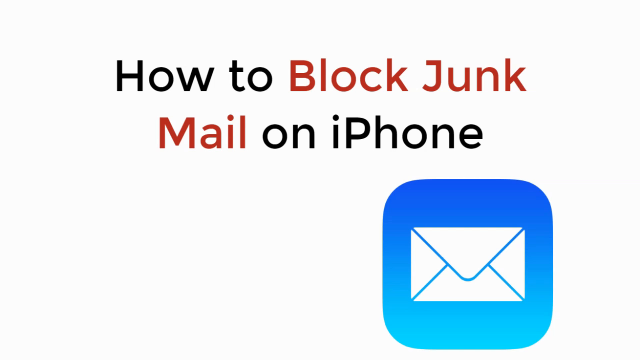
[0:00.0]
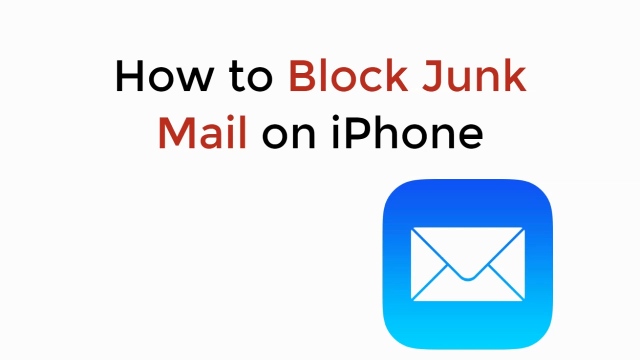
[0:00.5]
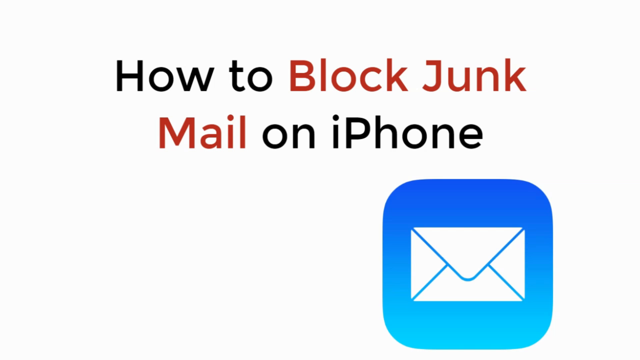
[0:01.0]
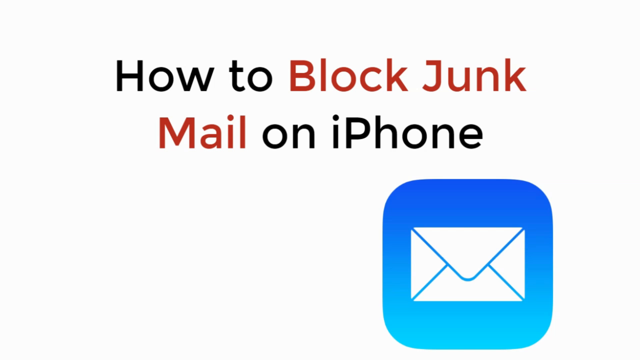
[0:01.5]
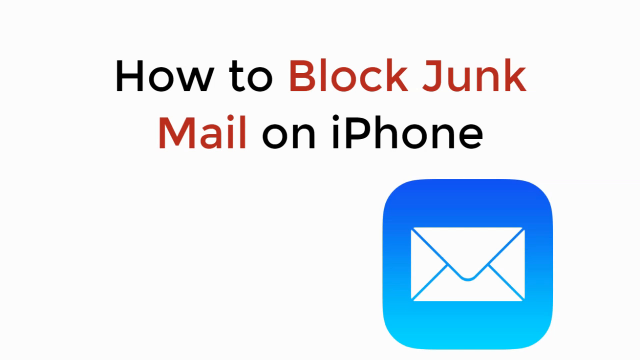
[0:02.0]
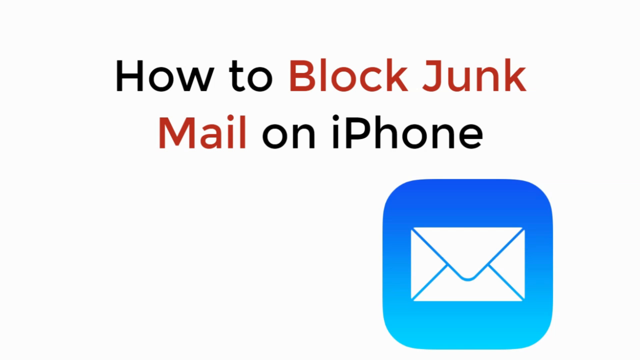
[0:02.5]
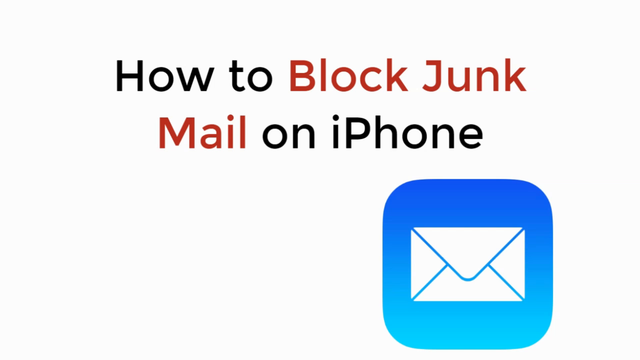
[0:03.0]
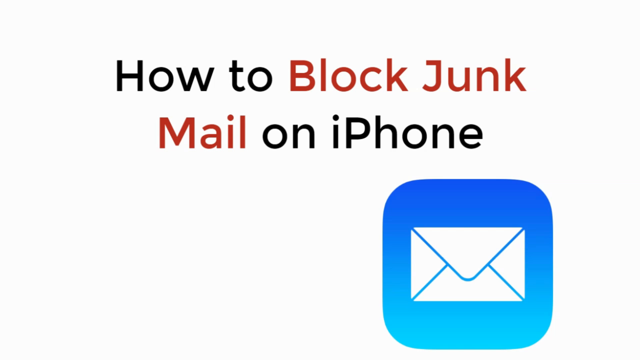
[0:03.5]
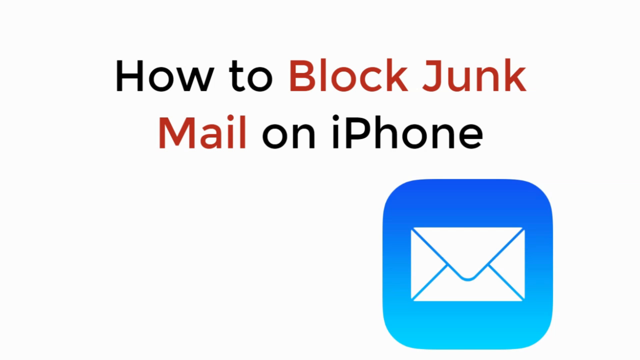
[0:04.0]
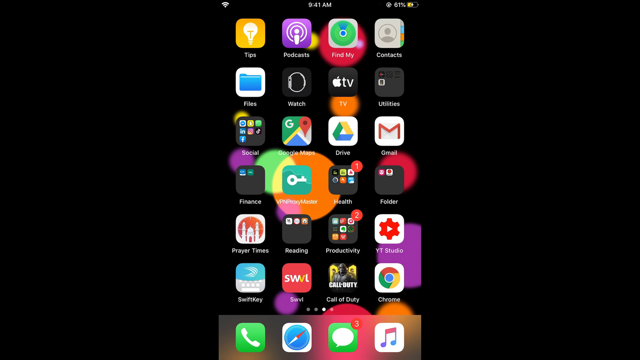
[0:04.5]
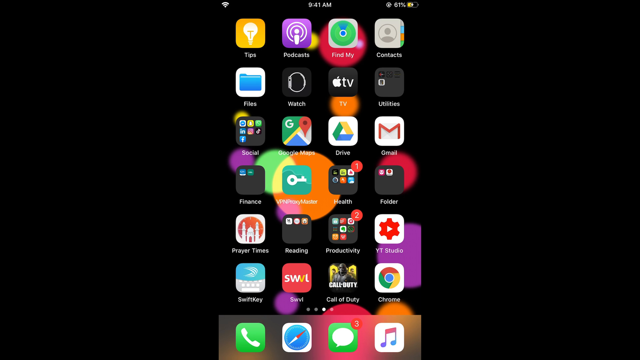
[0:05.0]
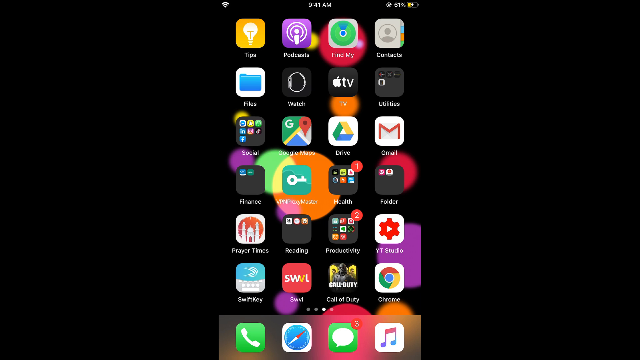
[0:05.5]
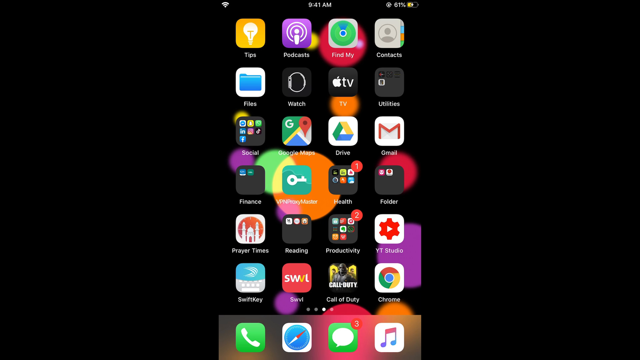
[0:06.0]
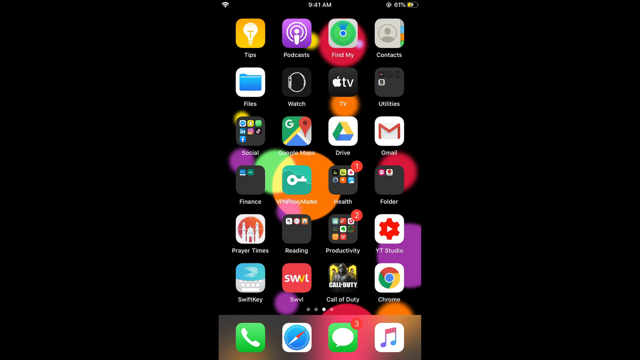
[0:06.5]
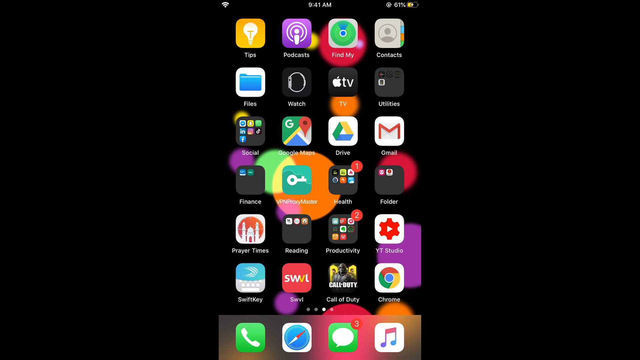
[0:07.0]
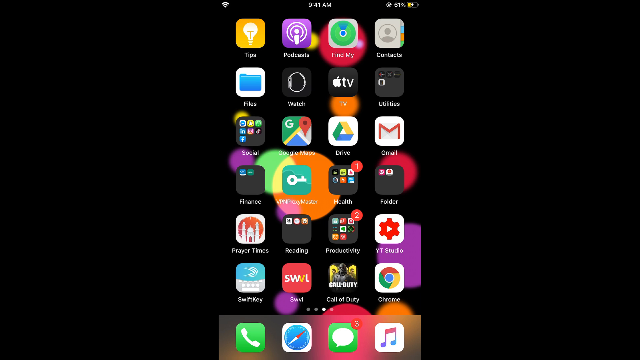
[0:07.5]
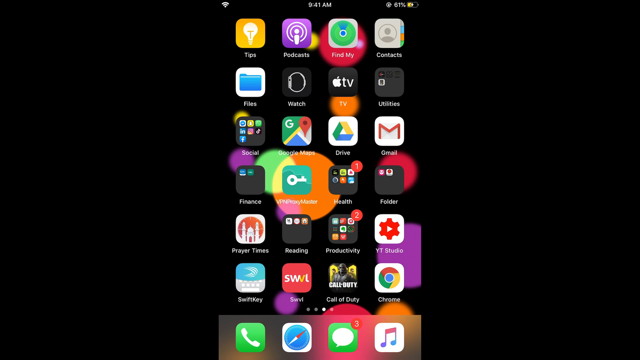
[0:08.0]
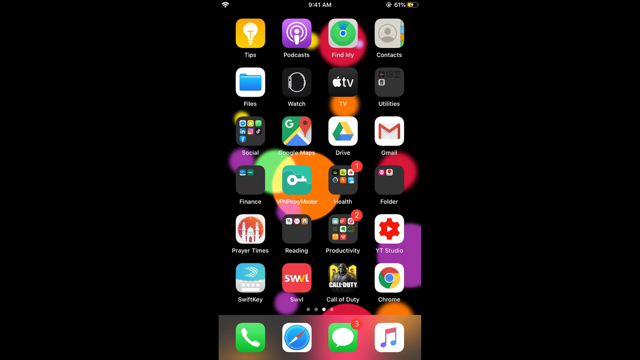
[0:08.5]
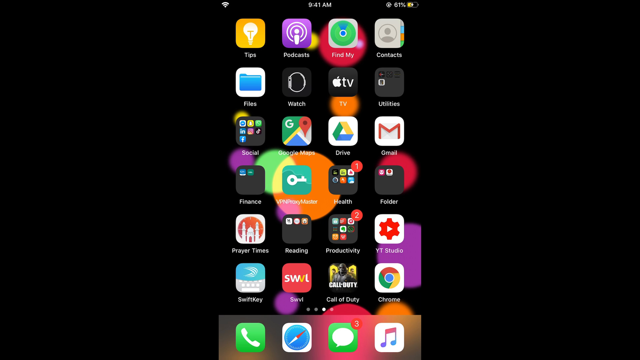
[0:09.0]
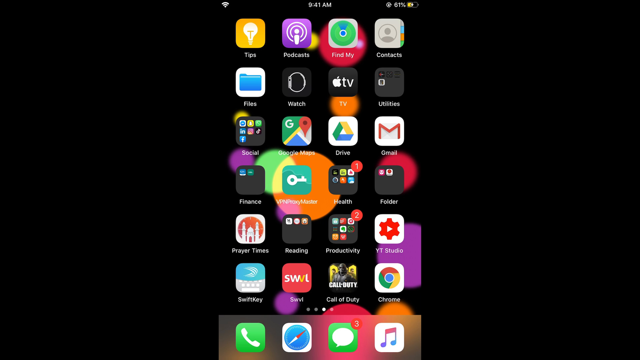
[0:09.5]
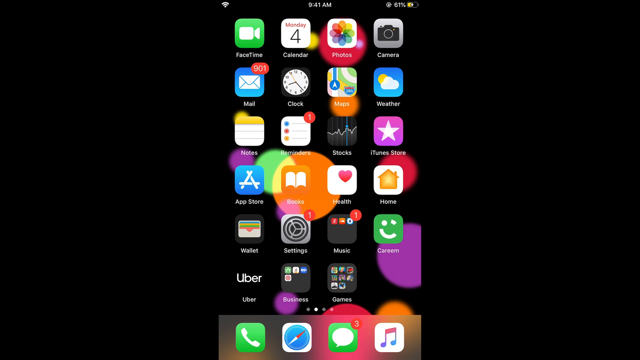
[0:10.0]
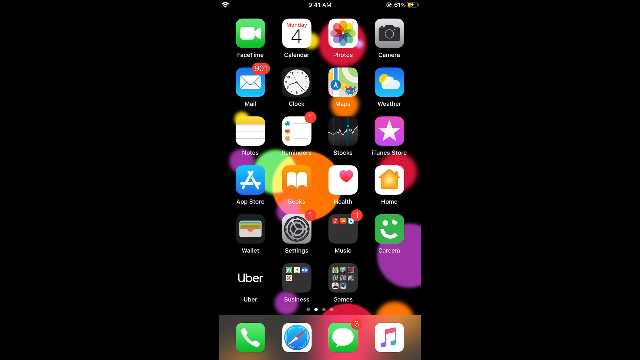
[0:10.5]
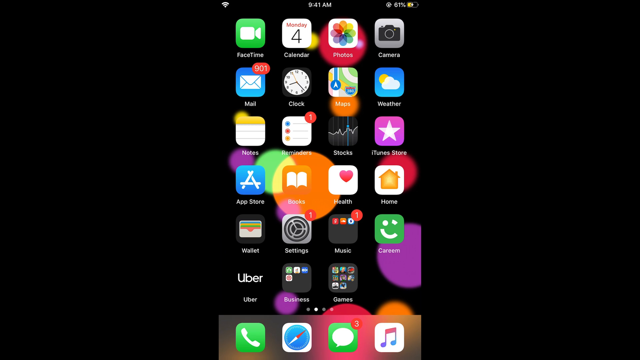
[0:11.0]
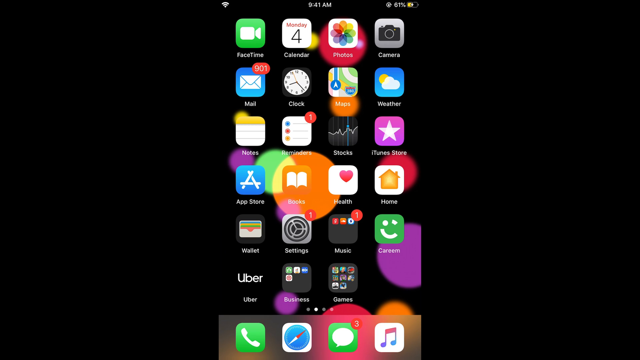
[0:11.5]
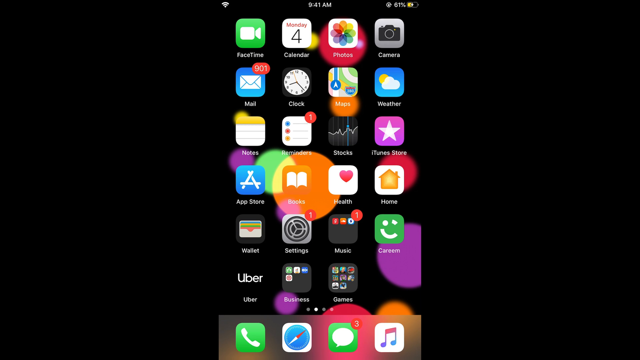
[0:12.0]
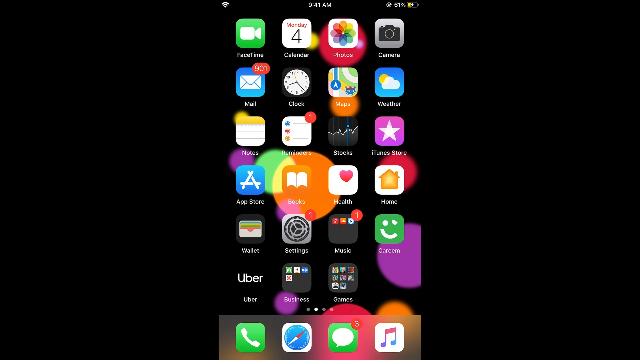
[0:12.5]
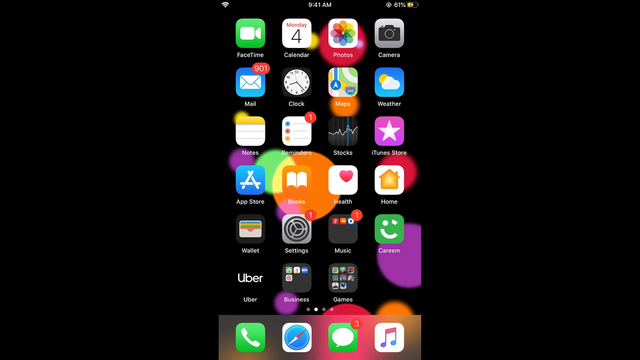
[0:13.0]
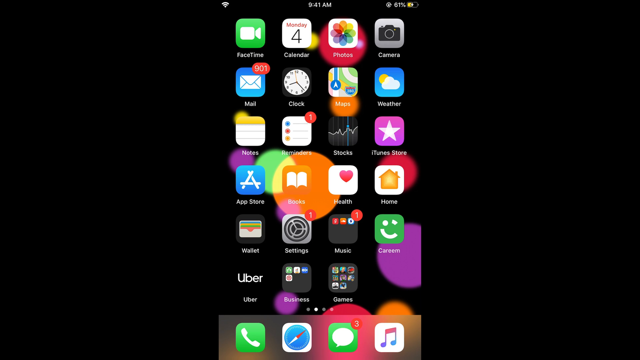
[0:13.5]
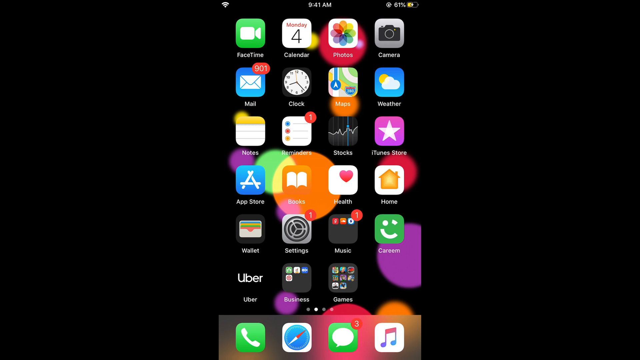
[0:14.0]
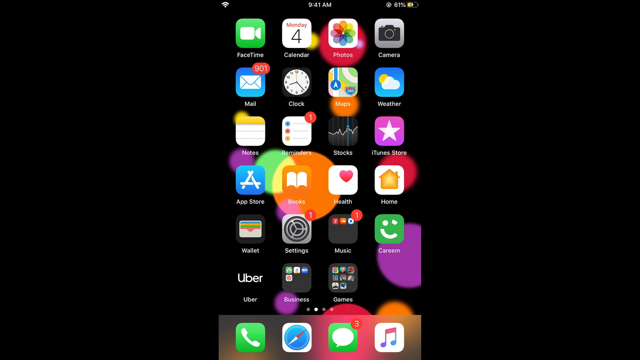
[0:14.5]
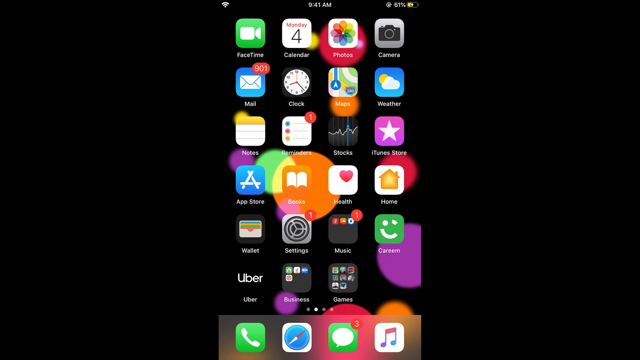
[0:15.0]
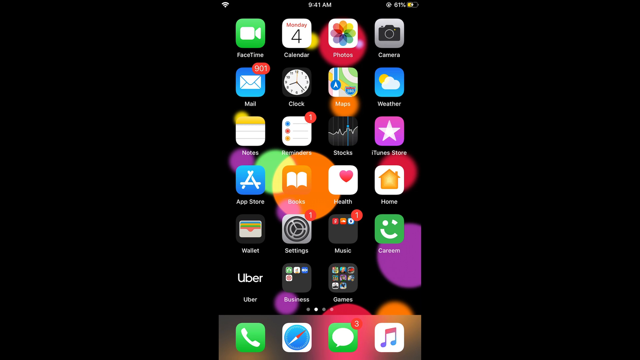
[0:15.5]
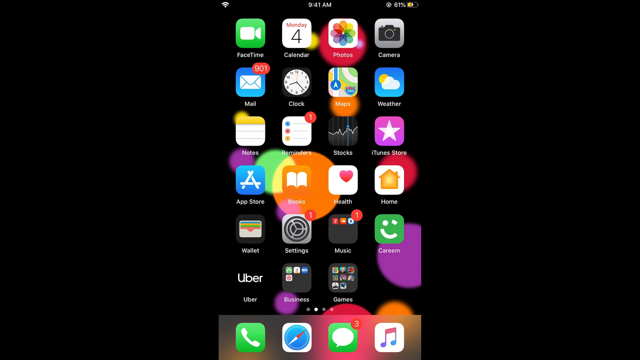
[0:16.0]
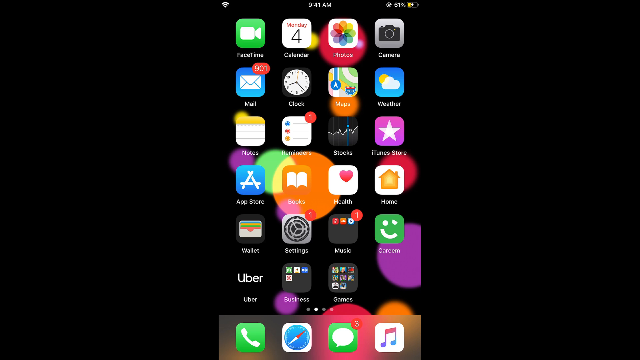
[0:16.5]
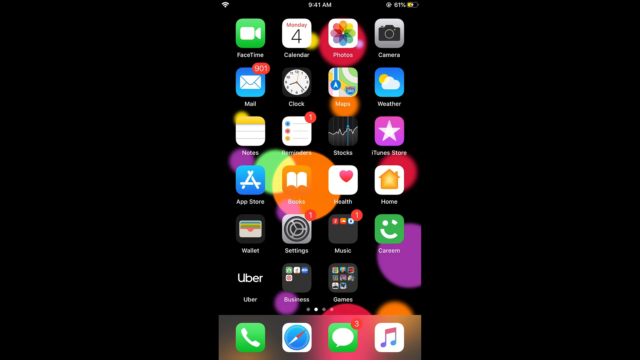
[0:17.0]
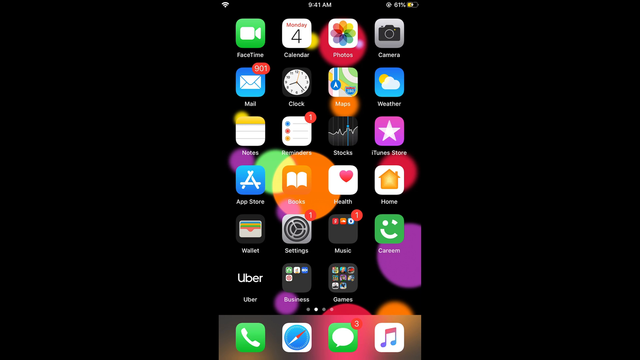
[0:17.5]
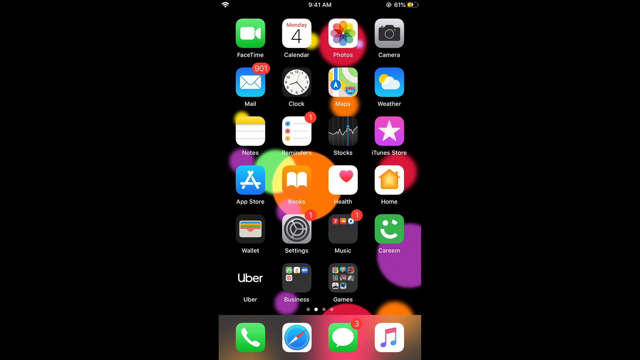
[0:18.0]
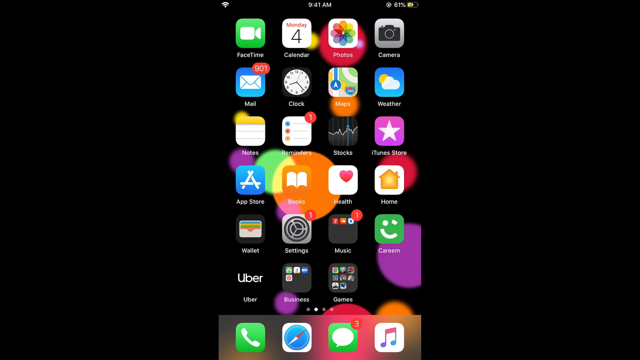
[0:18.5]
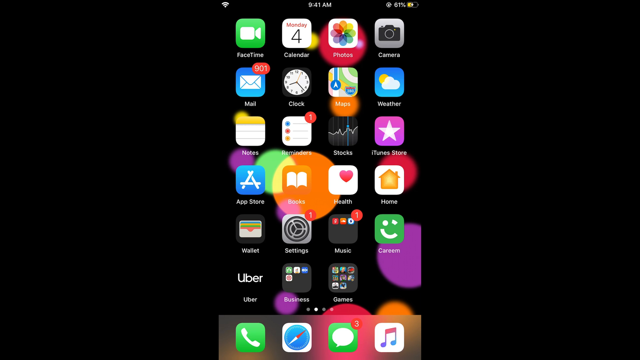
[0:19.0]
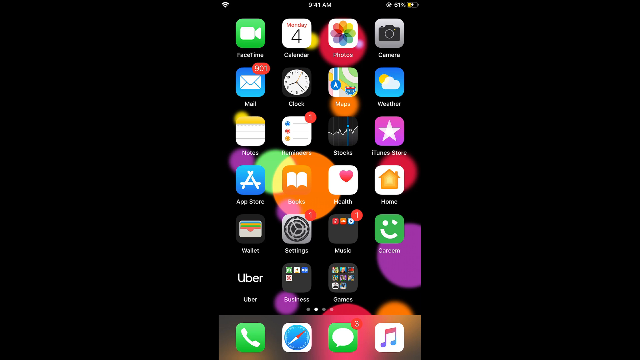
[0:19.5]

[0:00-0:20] The video begins with a title screen reading "how to block junk mail on iPhone", with "how to" written in black, "block junk mail" in red and "on iPhone" in black. Next to the text is an envelope icon, like a message icon found on the iPhone. The video then shows the applications on someone's iPhone screen, including Tips, Contacts, Podcasts, Watch, Files, a folder, Gmail, Drive, Social, Prayer Times, Call of Duty, Chrome, YT Studio and Apple TV. It then scrolls to the next page, which has FaceTime, Calendar, Photos, Camera, Weather, Maps, Clock, Home, Uber, Business, Games, Wallet, the App Store, Books and Notes.